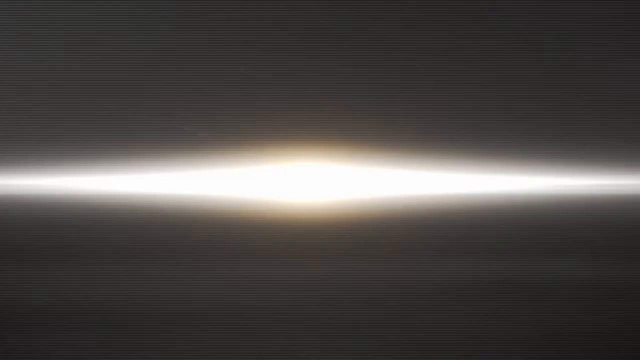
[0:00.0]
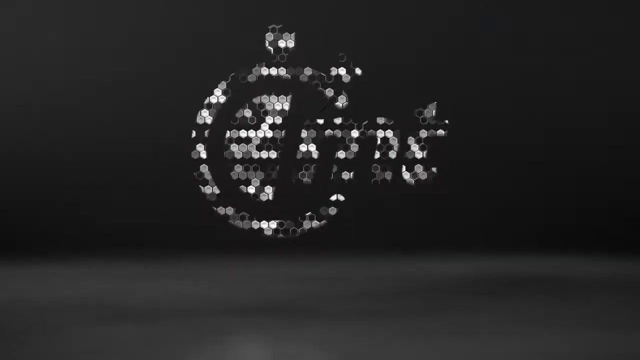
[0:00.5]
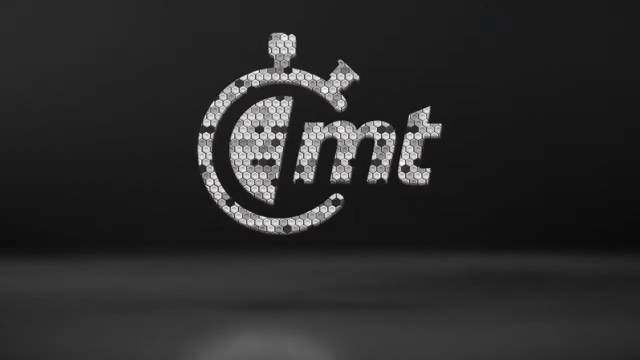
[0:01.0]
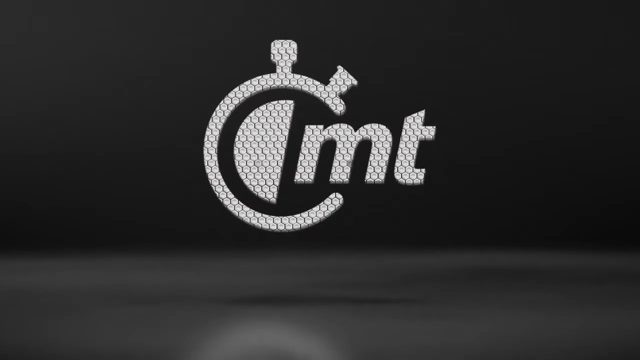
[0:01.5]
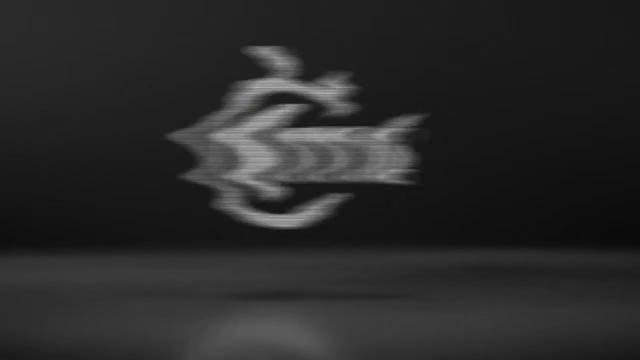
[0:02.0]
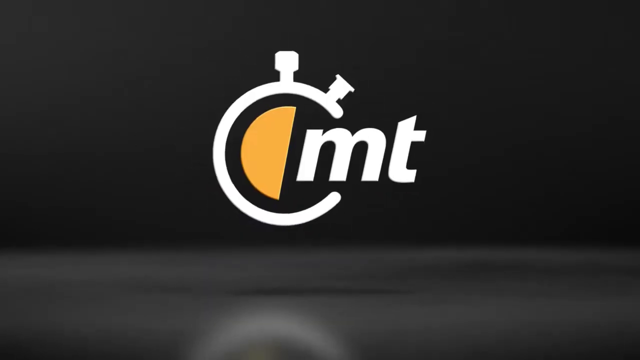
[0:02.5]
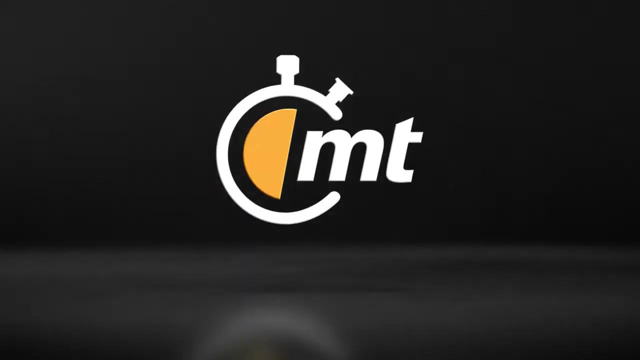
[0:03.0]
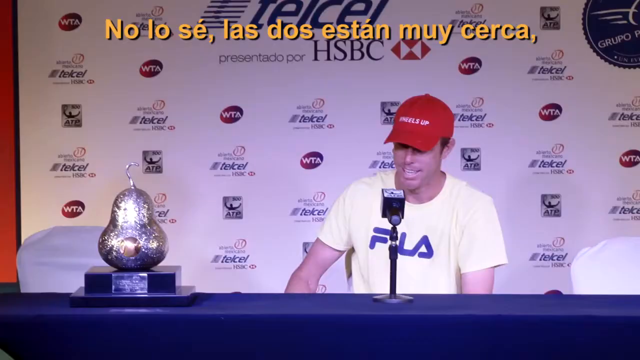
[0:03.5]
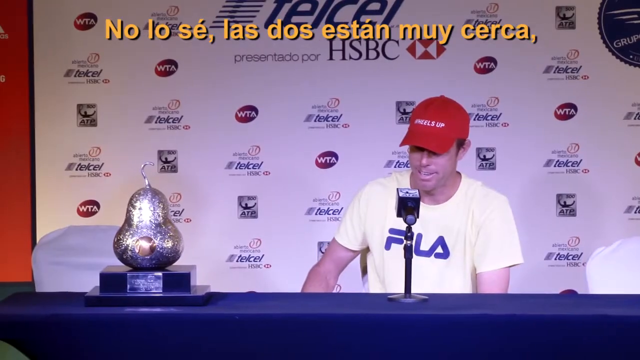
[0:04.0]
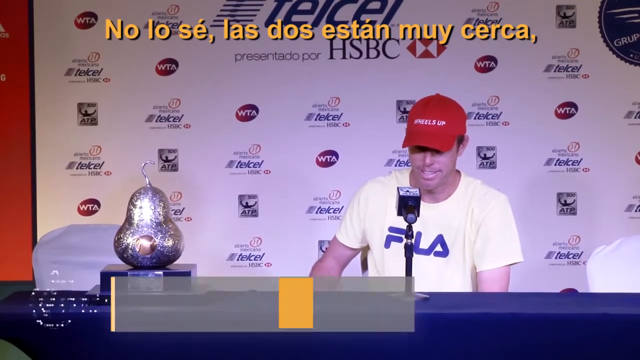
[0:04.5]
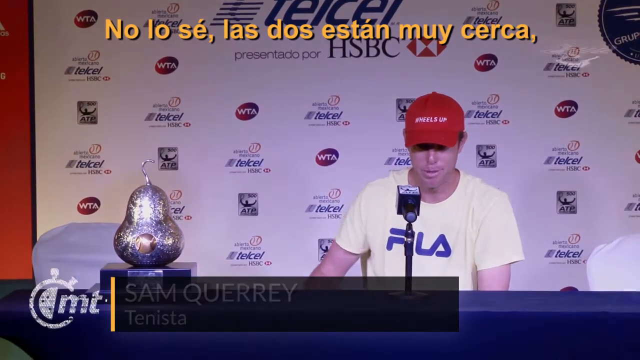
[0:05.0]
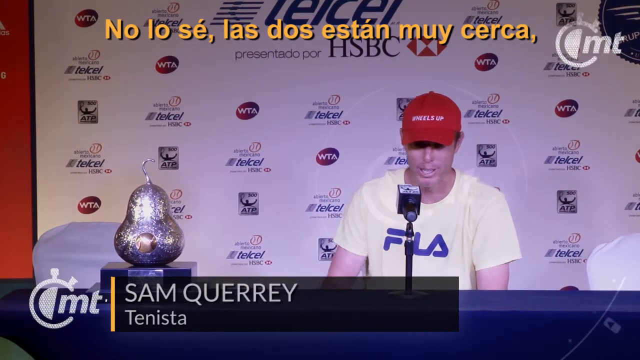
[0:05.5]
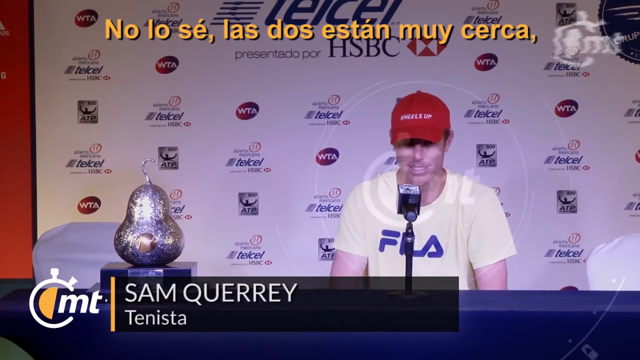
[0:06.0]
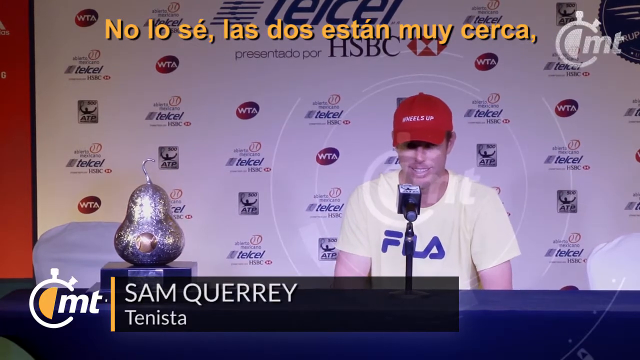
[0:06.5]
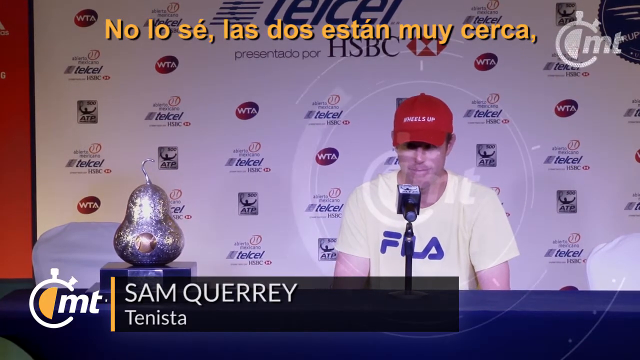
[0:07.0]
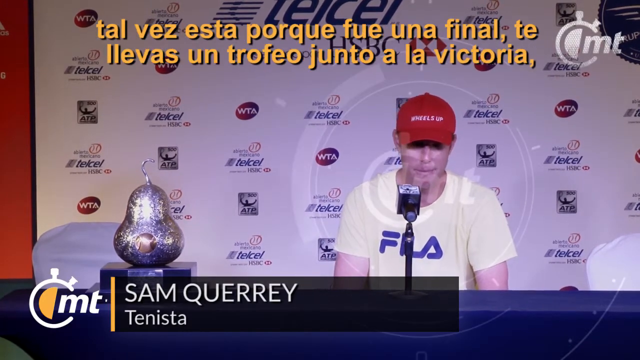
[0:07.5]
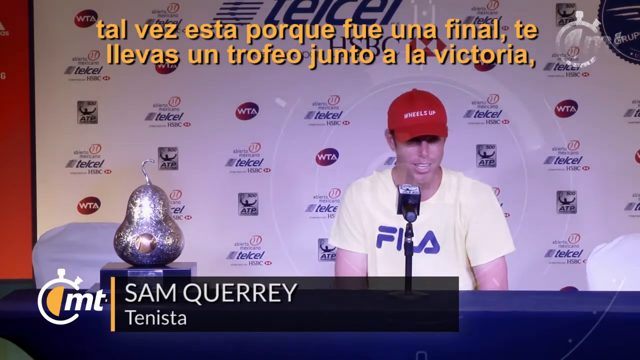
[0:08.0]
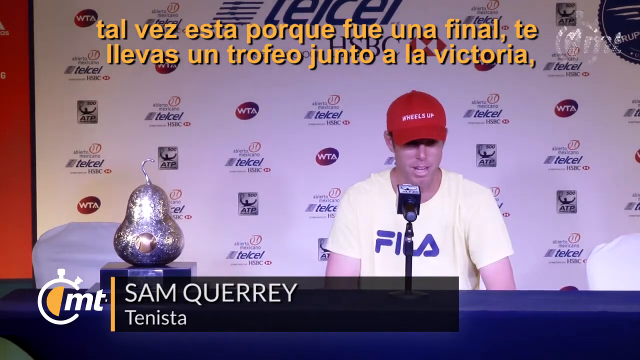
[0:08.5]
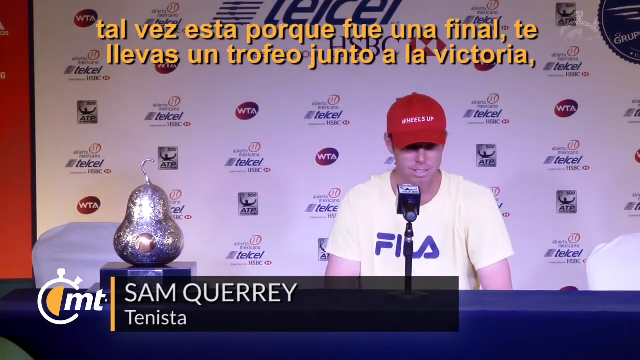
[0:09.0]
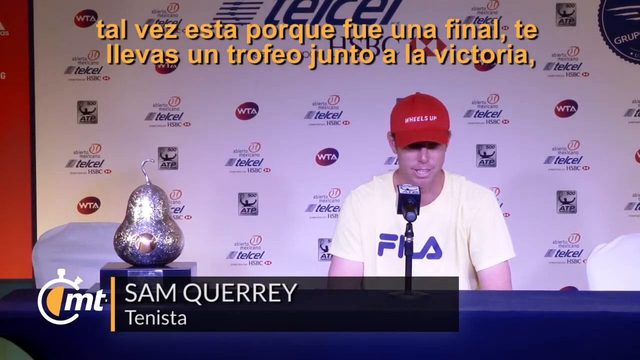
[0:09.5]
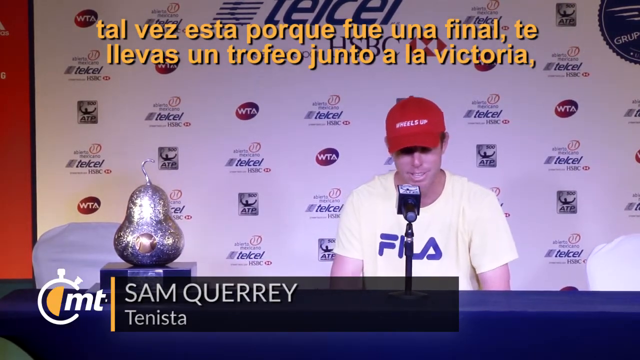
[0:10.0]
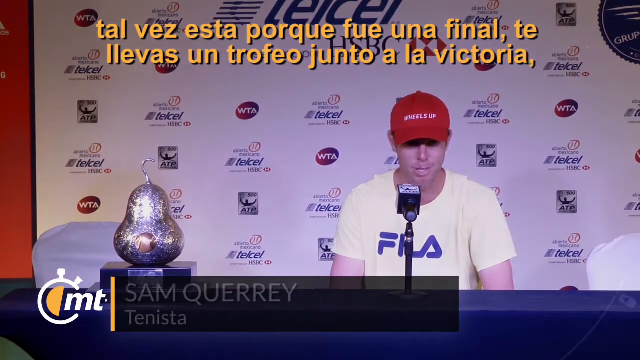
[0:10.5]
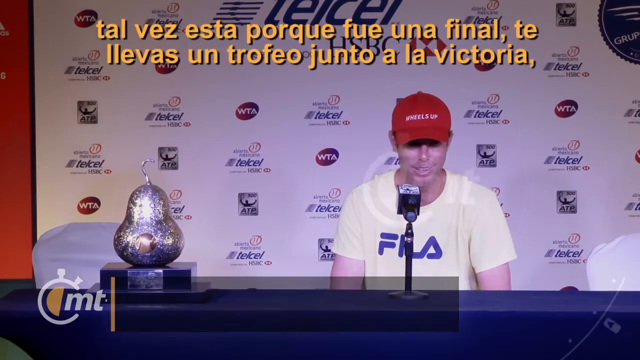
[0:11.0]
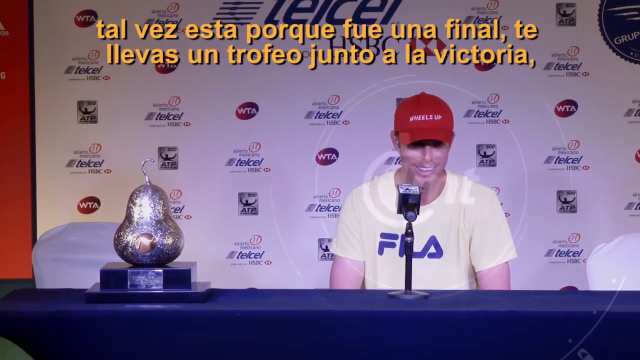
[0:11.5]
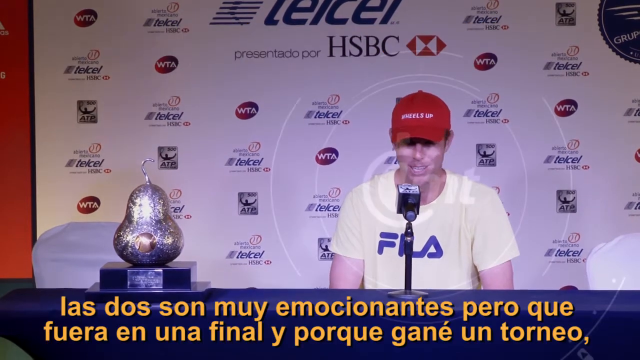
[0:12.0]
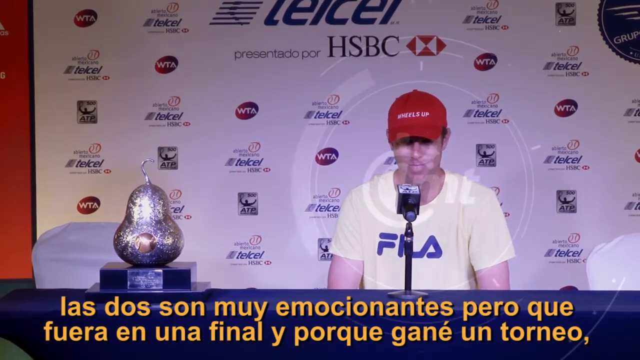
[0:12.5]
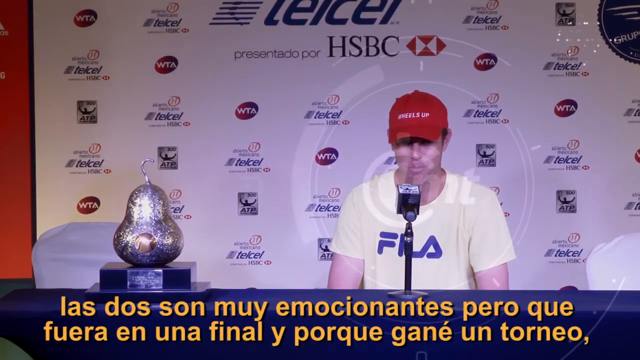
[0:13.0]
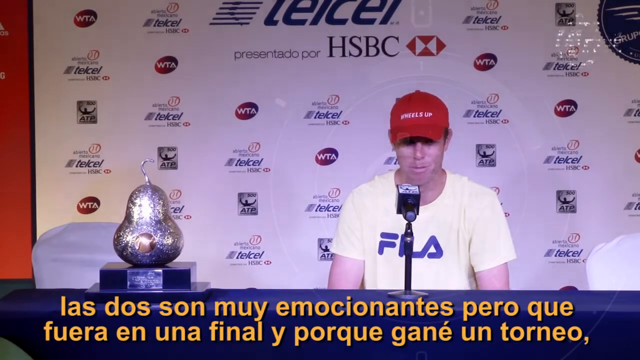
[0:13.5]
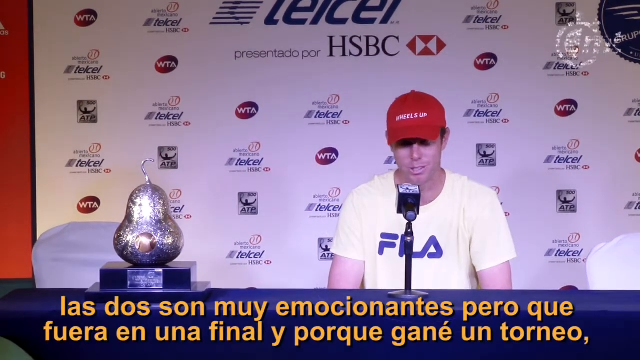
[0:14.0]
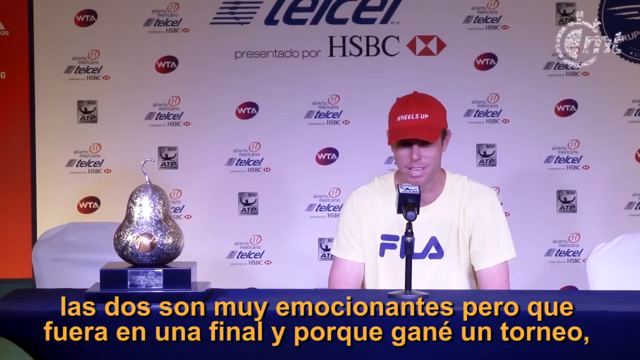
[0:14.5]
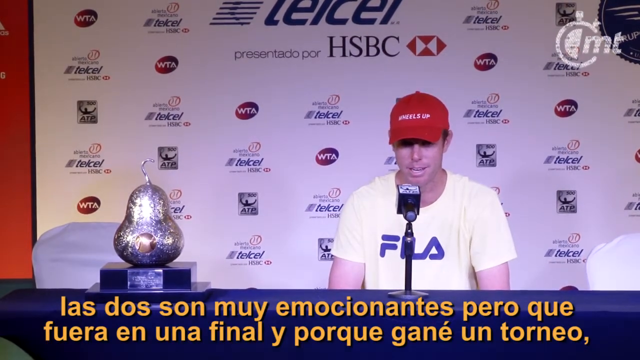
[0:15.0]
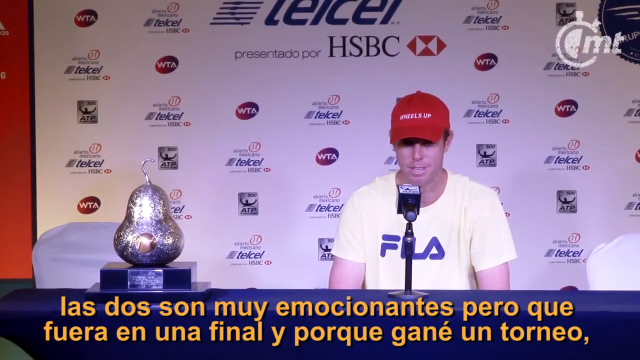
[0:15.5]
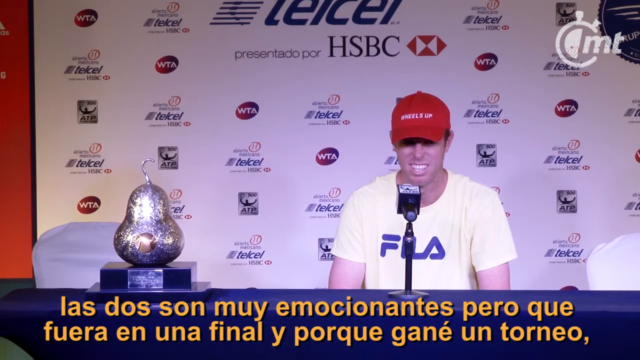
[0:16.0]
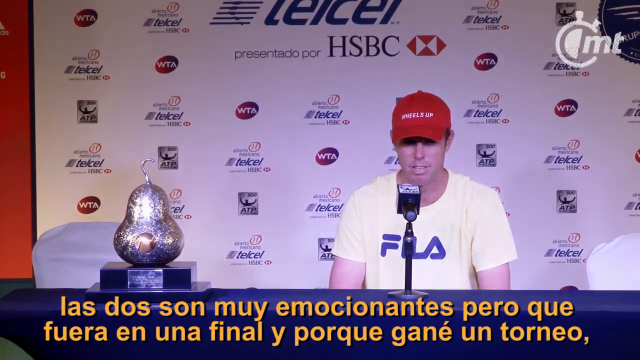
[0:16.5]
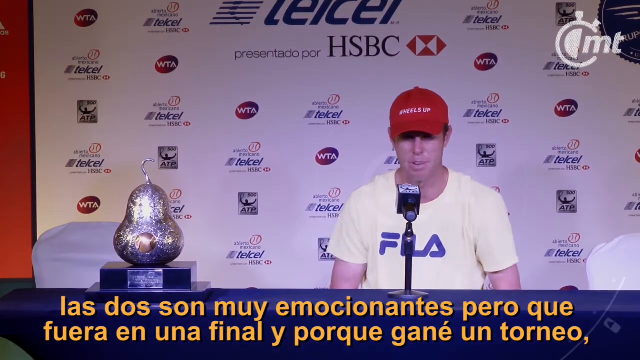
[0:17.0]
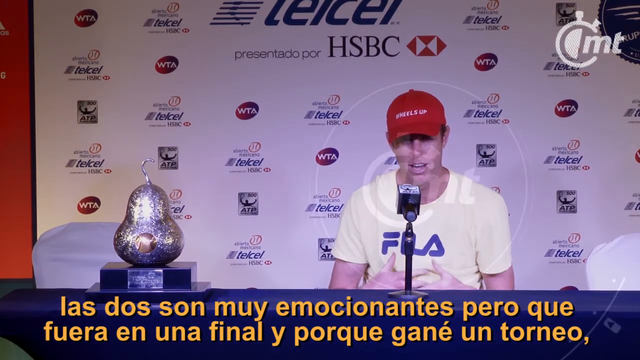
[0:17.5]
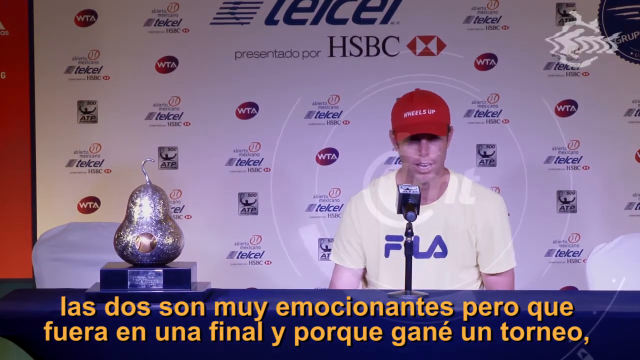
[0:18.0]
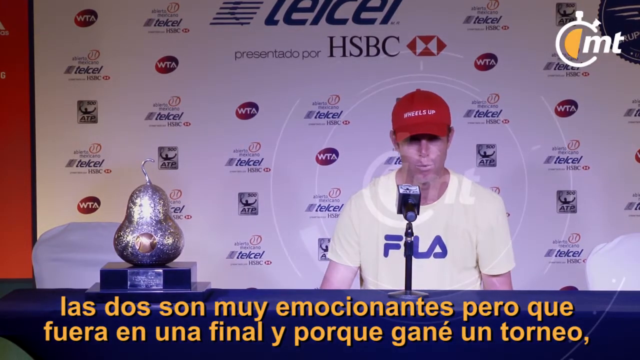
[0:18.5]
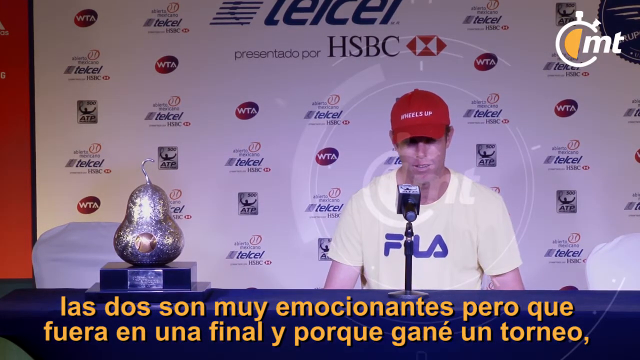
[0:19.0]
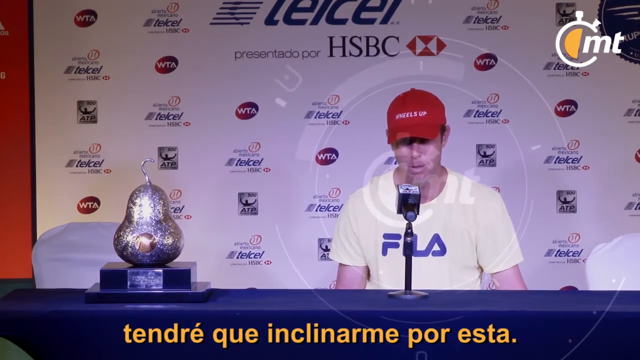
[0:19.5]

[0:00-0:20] The video opens on a black background with white letters reading "CMT", the C shaped like a stopwatch. A man in his early 20s then appears, wearing a red hat that says "Wheels Up" and a white t-shirt that says "Fila". His name is Sam Querrey. A microphone is in front of him, and to the viewer's left there is some type of pear-shaped object with a hook on the top. Closed captions appear in French. Behind him is a wall of advertisement with the letters A-T-P-W-T-A-T-E-K-E-L. He is probably a tennis player, and he is most likely at a press conference.